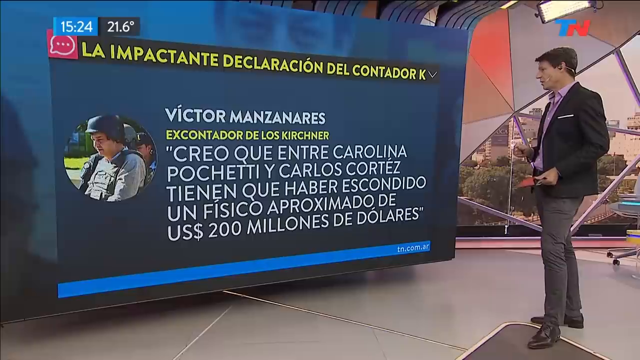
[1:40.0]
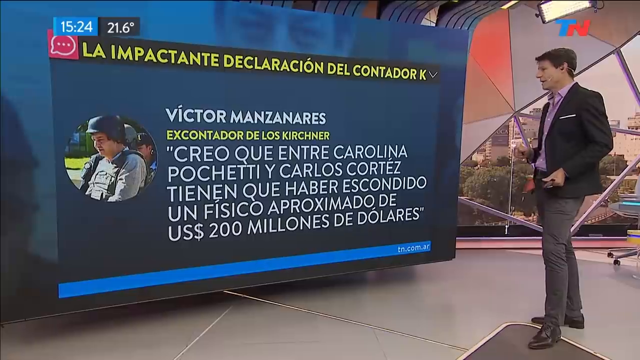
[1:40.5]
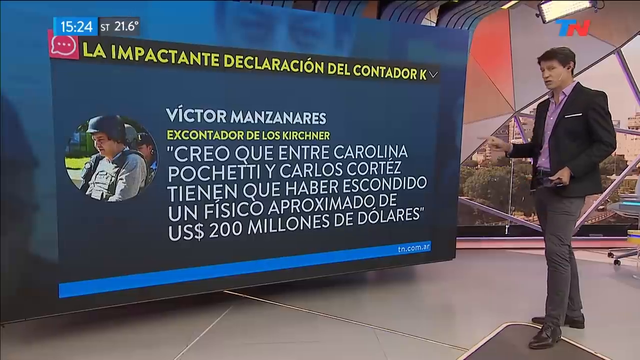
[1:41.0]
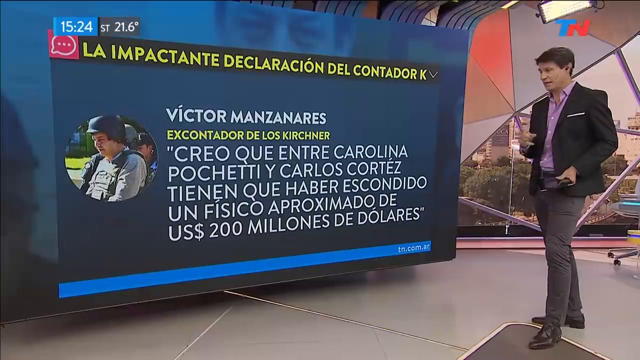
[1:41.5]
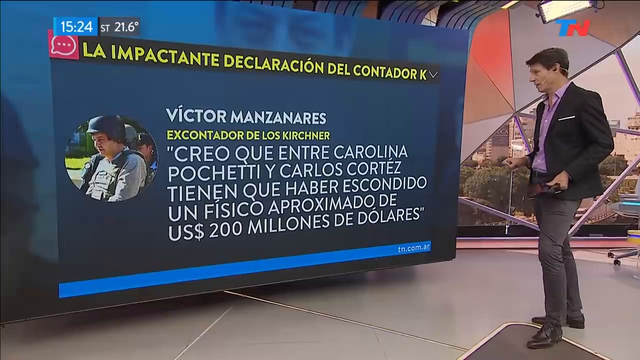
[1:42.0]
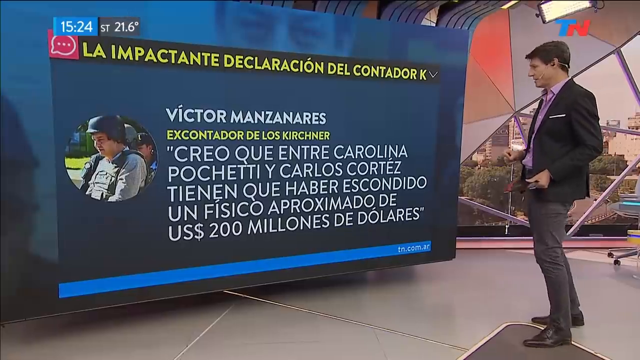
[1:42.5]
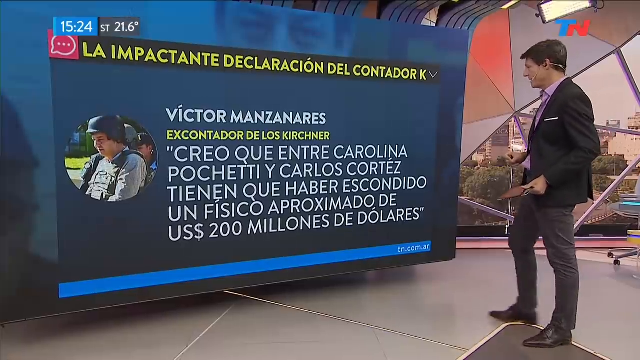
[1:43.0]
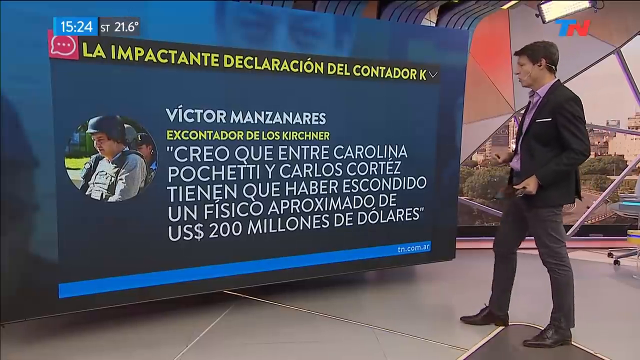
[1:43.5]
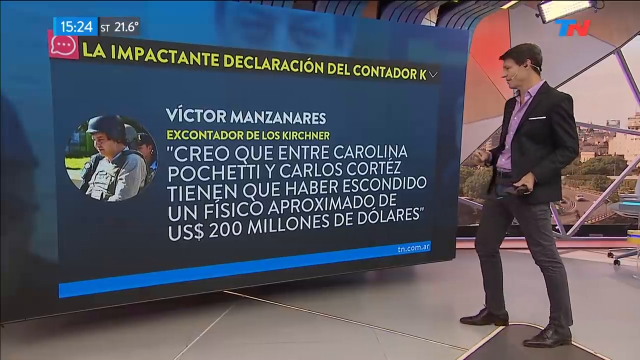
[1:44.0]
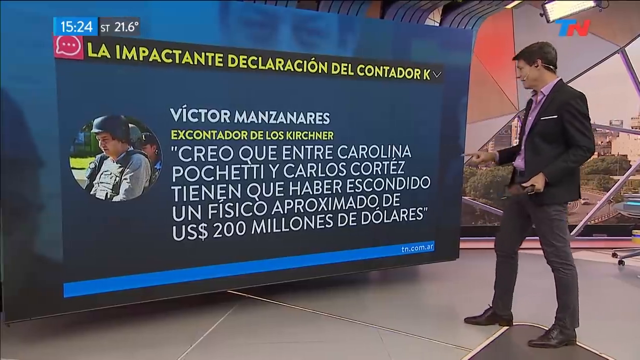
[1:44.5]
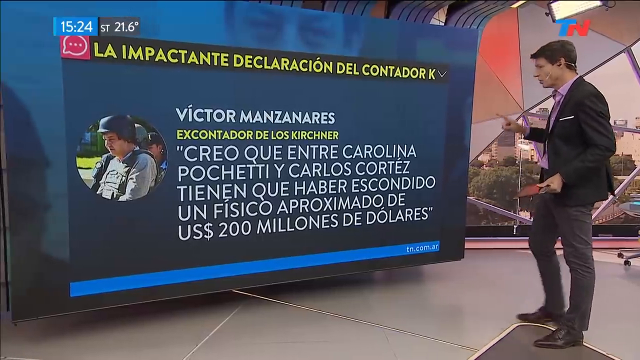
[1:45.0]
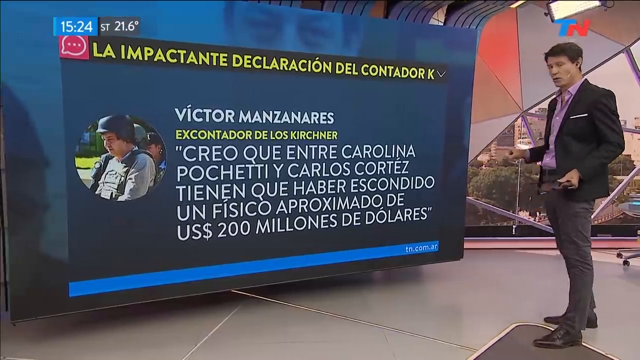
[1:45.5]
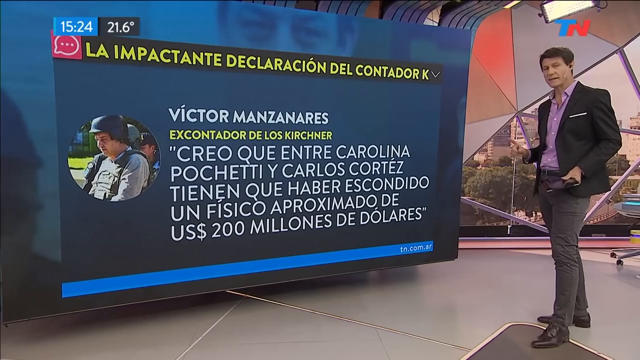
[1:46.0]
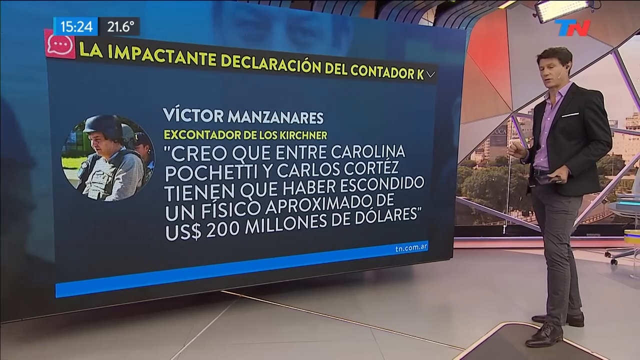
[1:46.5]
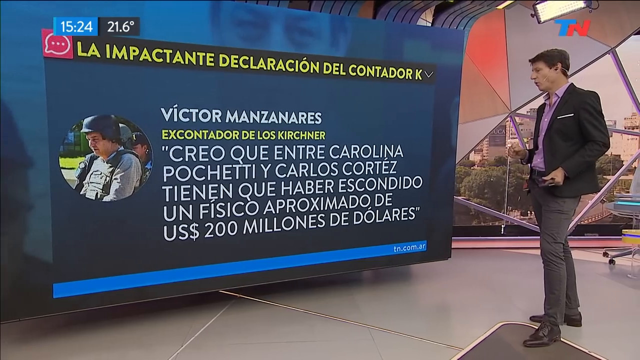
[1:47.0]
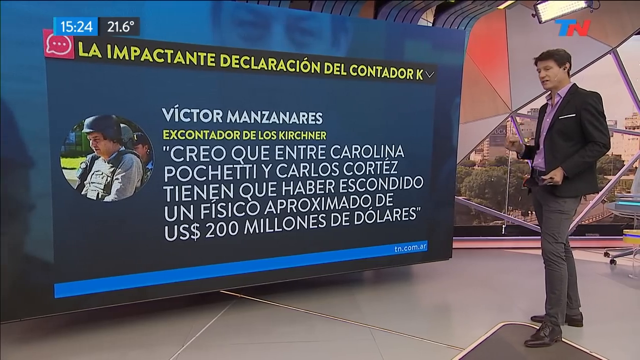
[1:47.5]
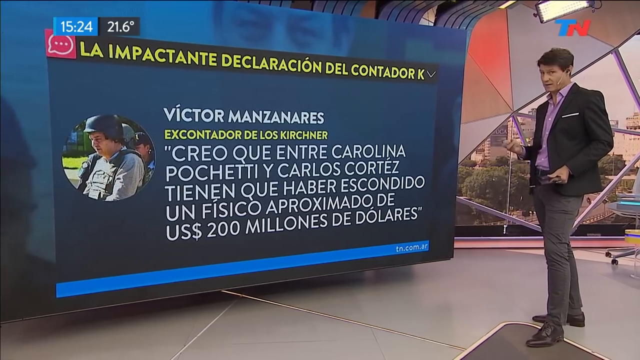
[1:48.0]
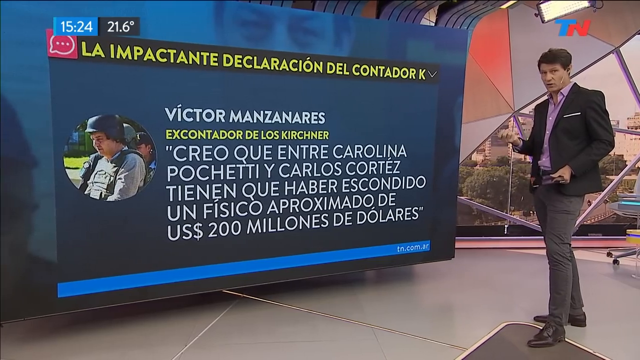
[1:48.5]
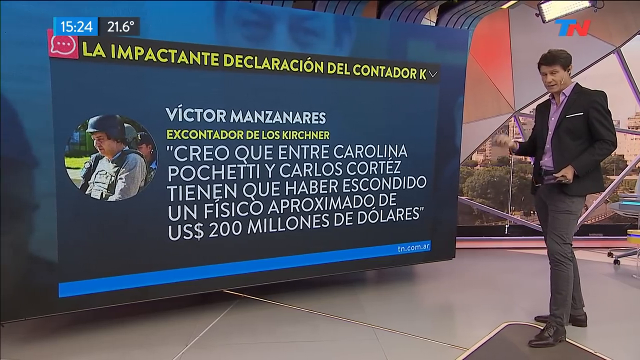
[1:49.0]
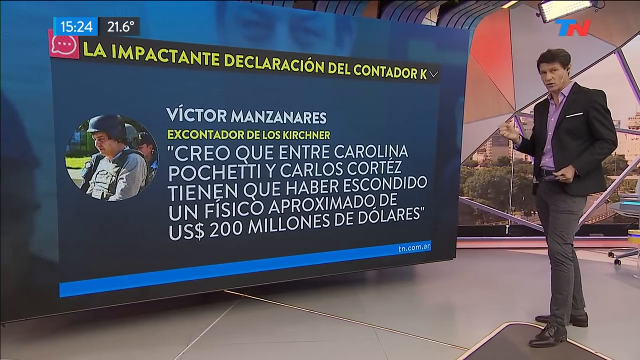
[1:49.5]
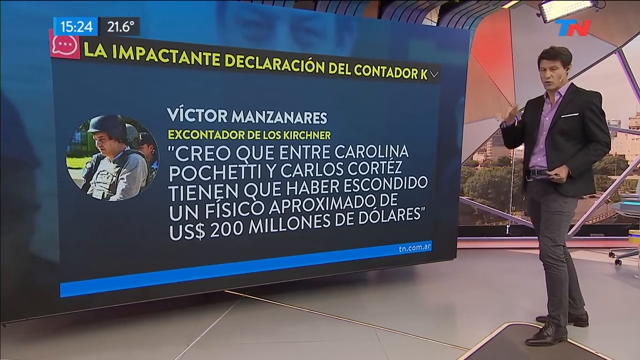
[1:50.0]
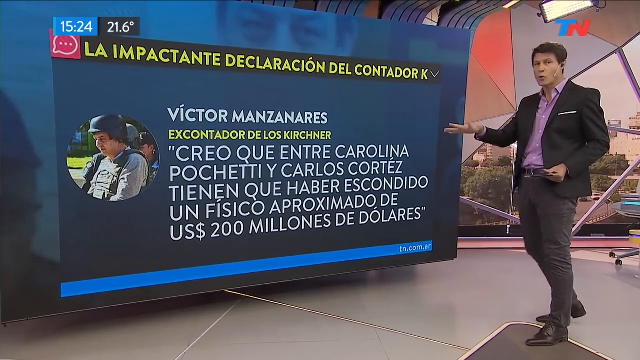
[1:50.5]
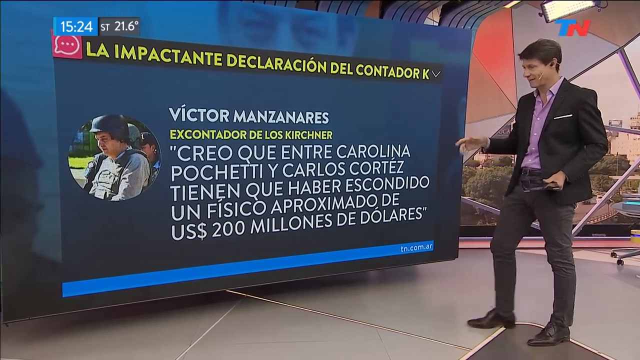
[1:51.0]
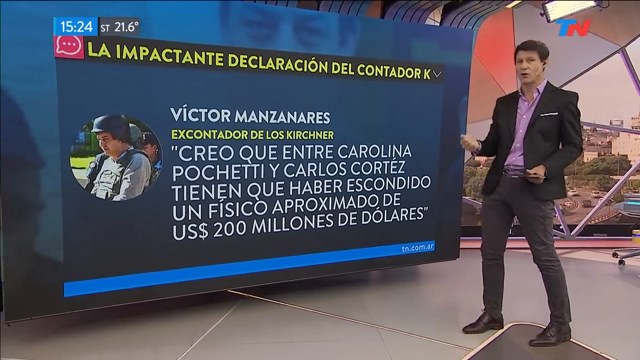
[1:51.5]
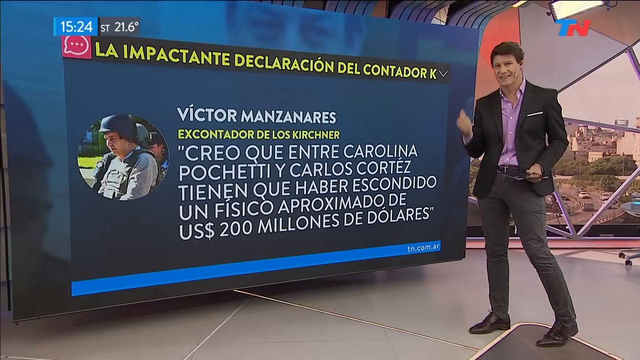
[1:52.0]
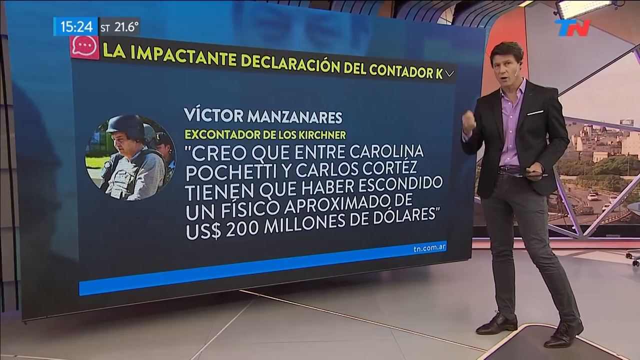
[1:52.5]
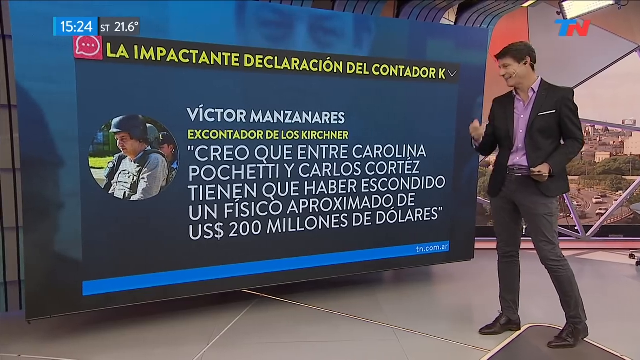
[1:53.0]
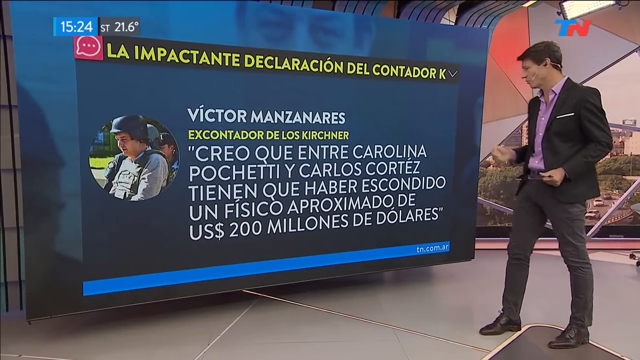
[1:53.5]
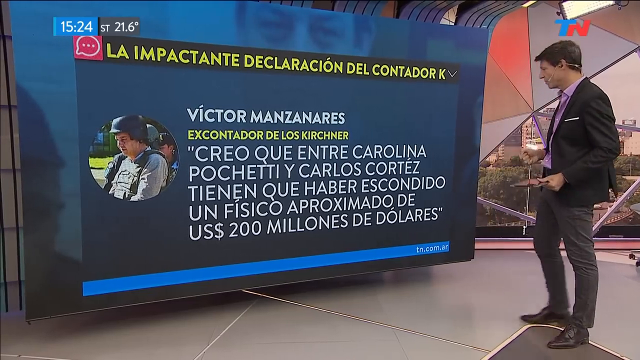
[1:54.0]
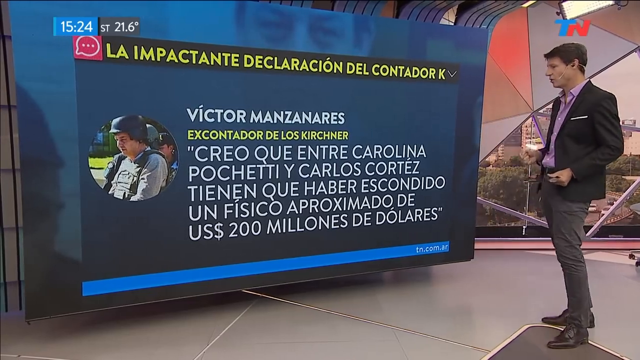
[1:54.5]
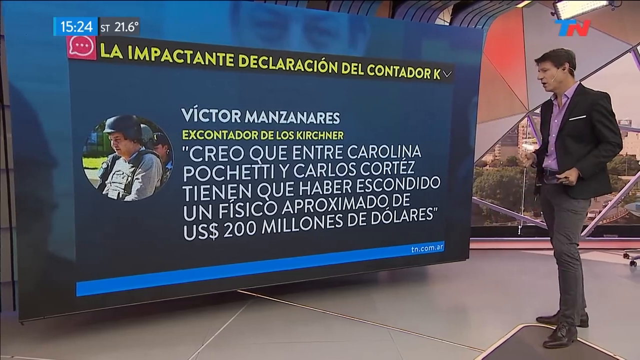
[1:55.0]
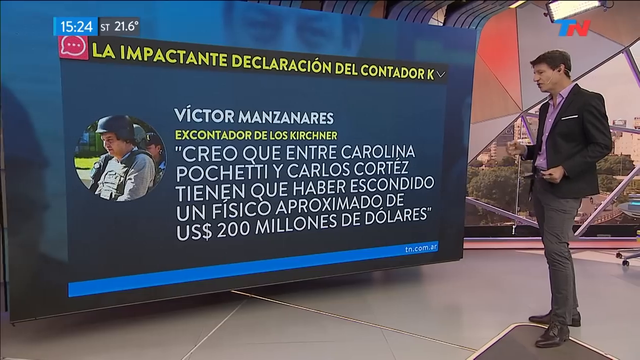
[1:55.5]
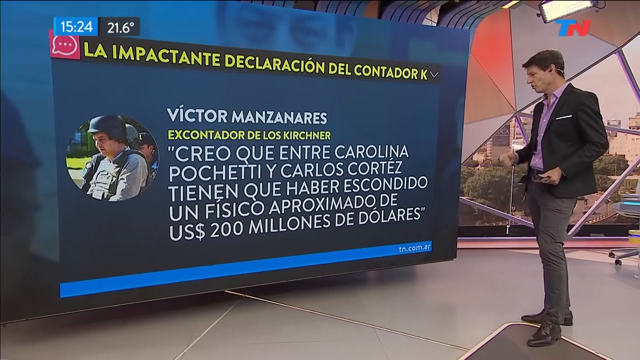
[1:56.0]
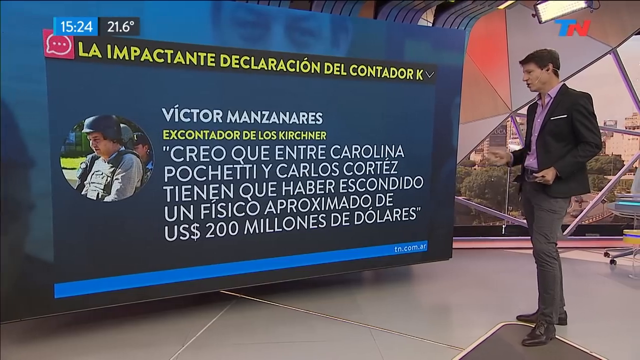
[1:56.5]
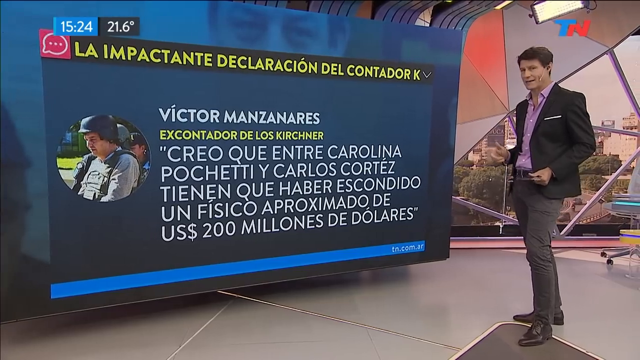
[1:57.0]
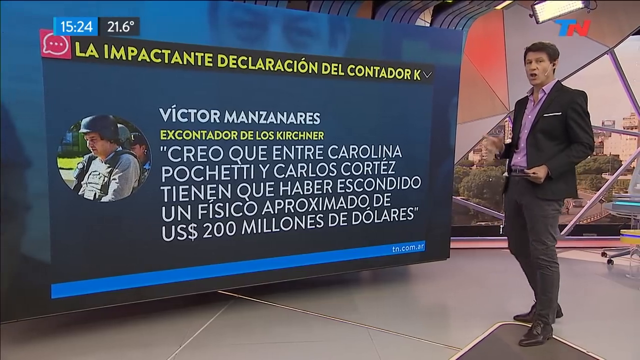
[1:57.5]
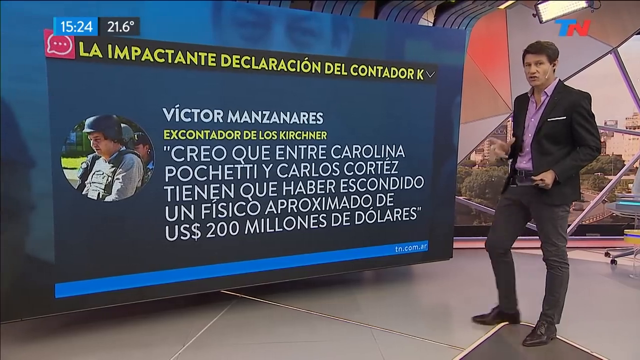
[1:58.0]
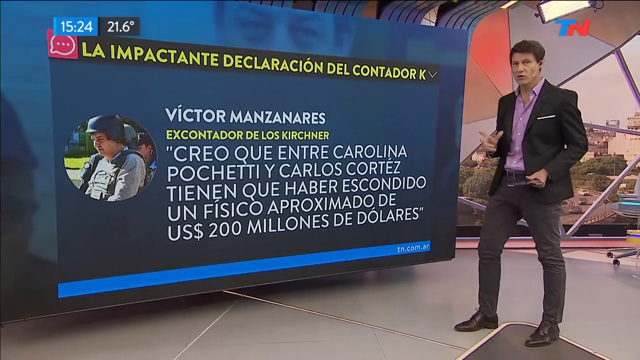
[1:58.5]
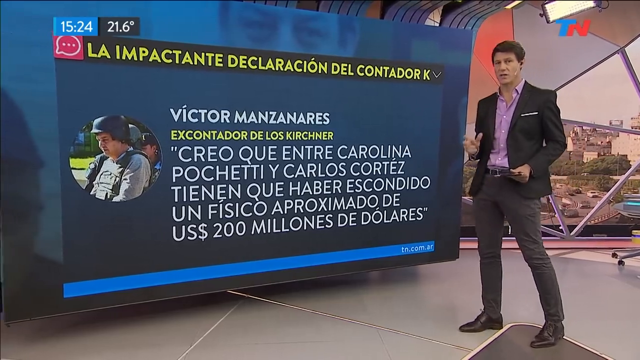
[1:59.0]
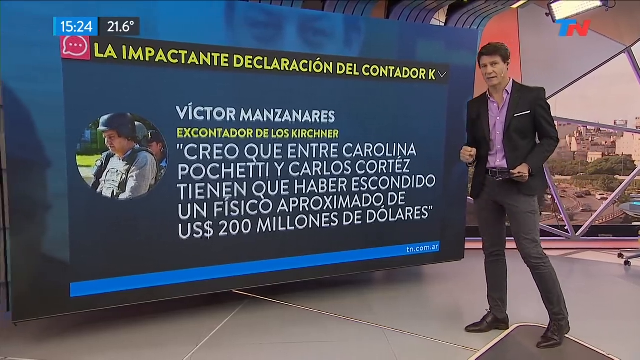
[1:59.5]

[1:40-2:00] The reporter, on the right side of the screen, no longer faces the camera and is seen somewhat from the side, looking directly at the TV screen toward his right. His pointer finger is out briefly, then he makes a closed fist, then holds his palm down, moving his hand side to side, then makes a fist again and moves it up and down, emphasizing his hand movements as he speaks. Near the end, the quote on the TV screen seems to move up, and what looks like a different quote or a different part of the quote appears. On the screen is white text that looks like someone's name, with the first name Victor. Beneath it is one line of yellow text in another language, and beneath that a five-line quote in white text.